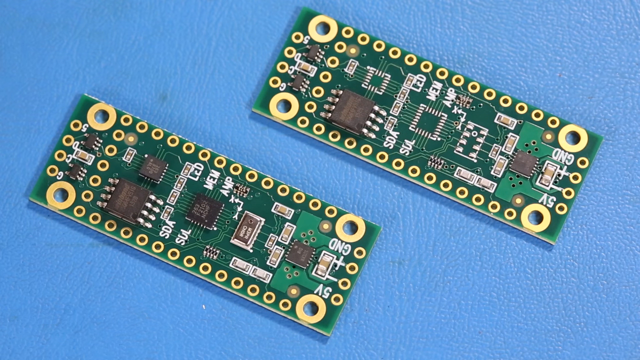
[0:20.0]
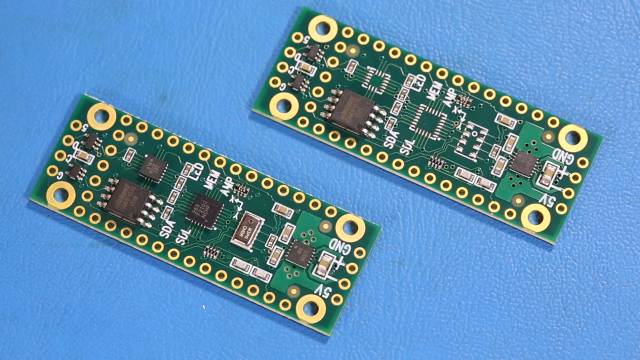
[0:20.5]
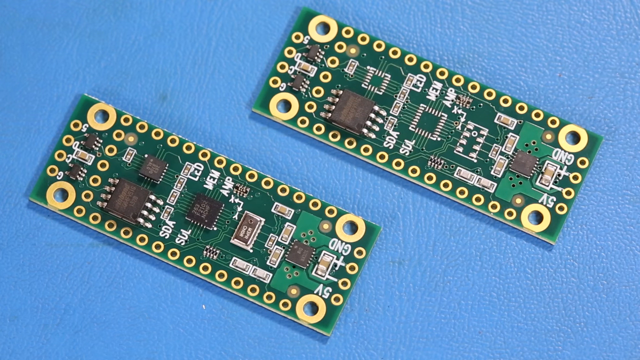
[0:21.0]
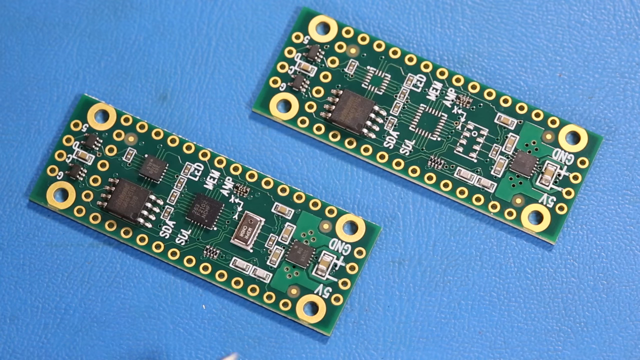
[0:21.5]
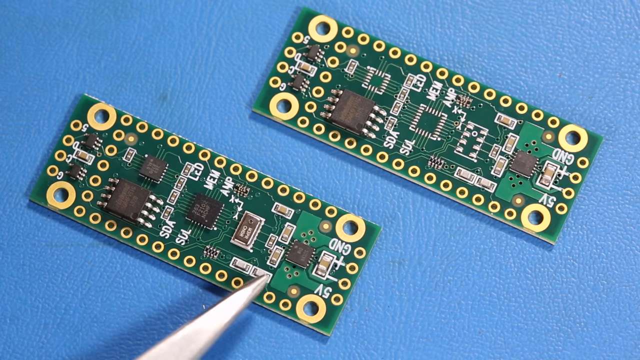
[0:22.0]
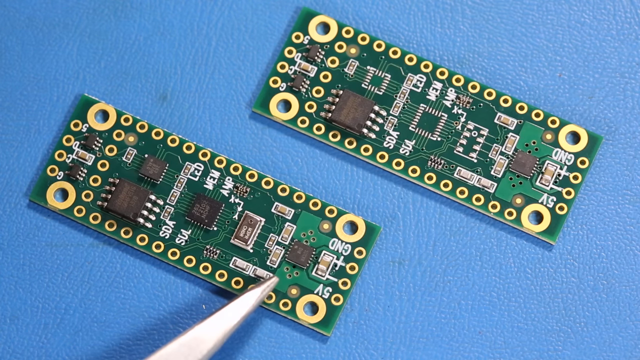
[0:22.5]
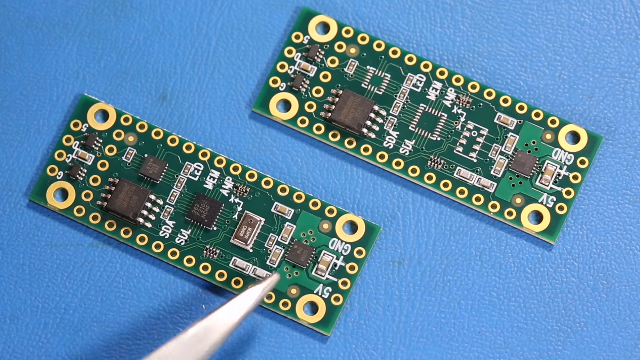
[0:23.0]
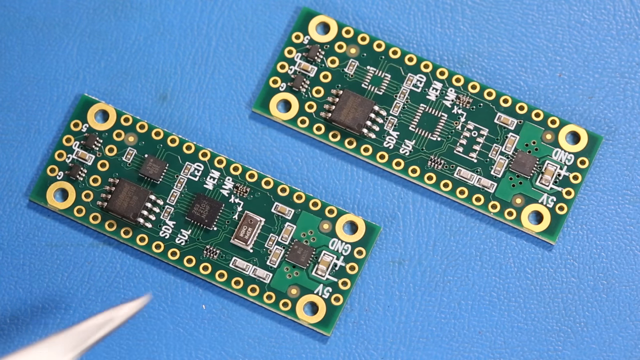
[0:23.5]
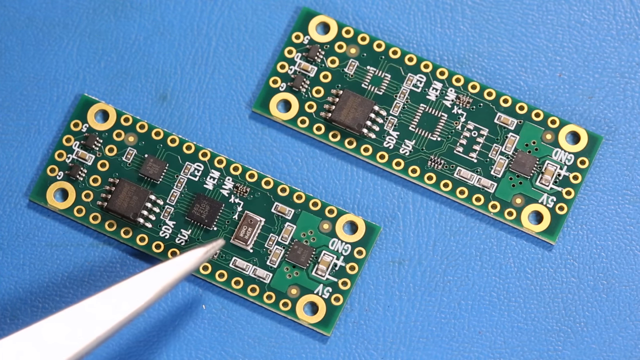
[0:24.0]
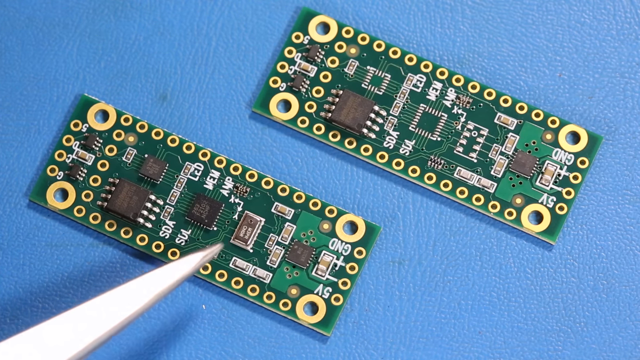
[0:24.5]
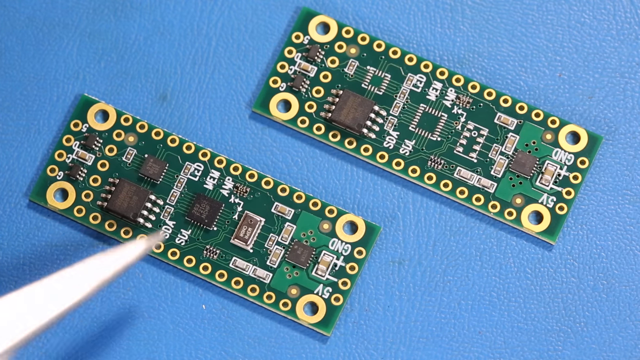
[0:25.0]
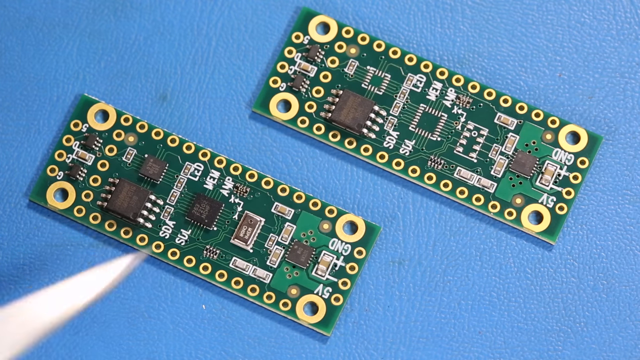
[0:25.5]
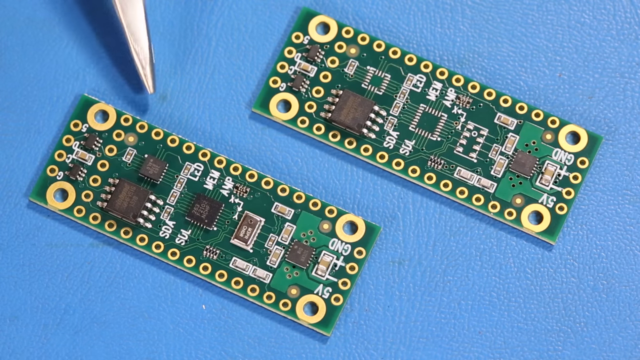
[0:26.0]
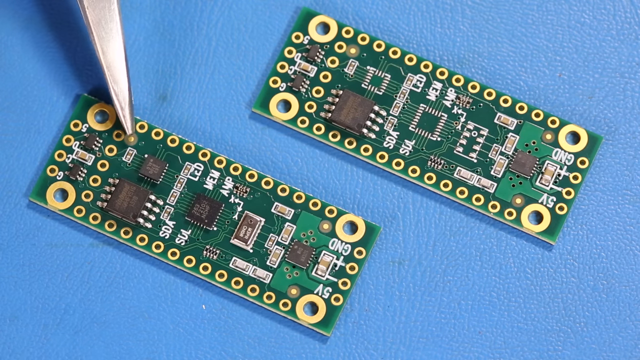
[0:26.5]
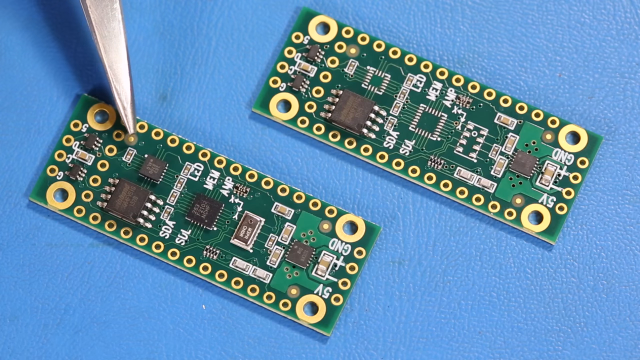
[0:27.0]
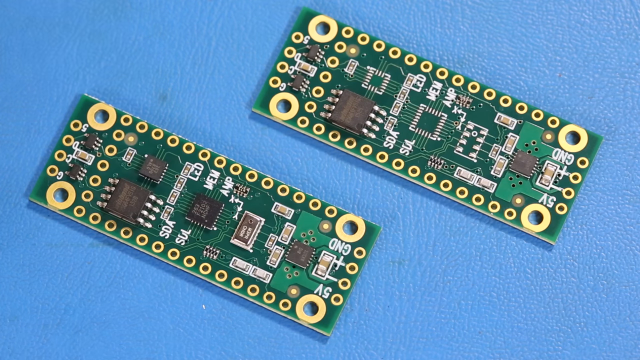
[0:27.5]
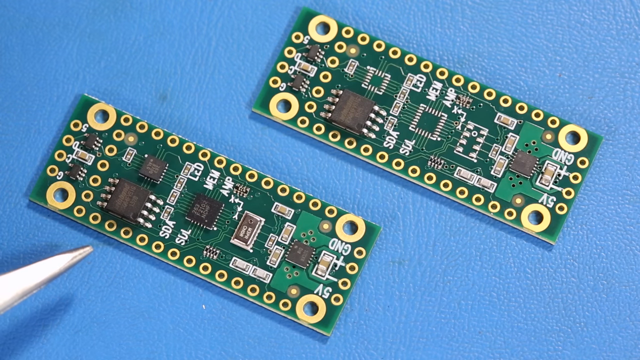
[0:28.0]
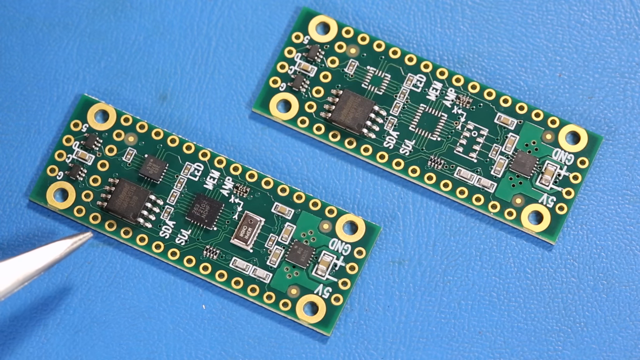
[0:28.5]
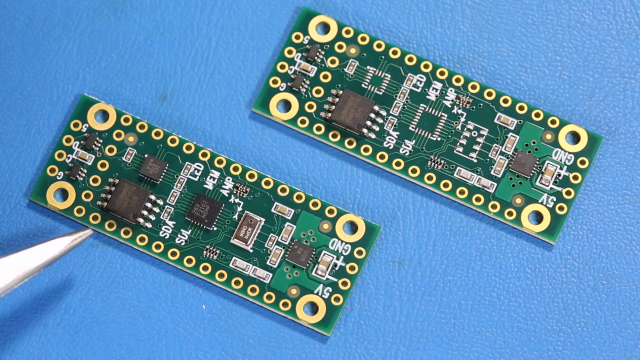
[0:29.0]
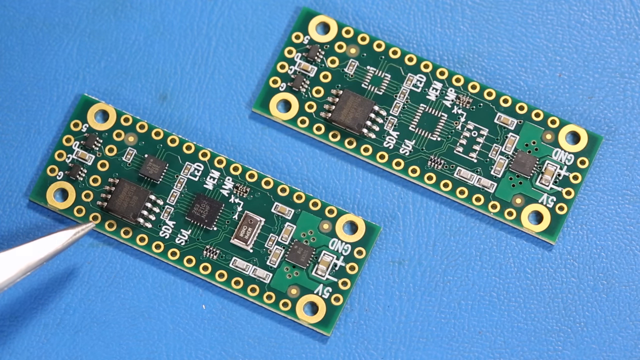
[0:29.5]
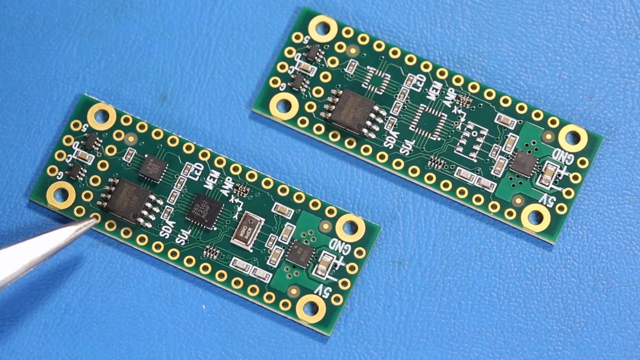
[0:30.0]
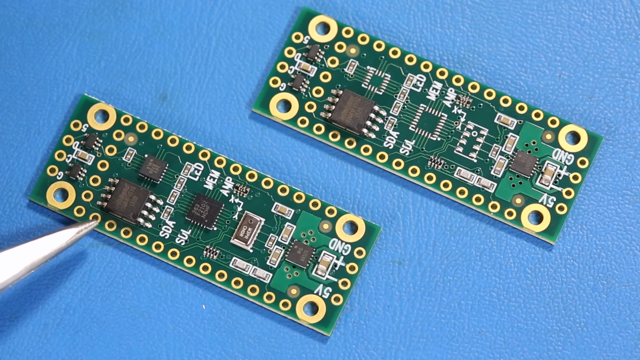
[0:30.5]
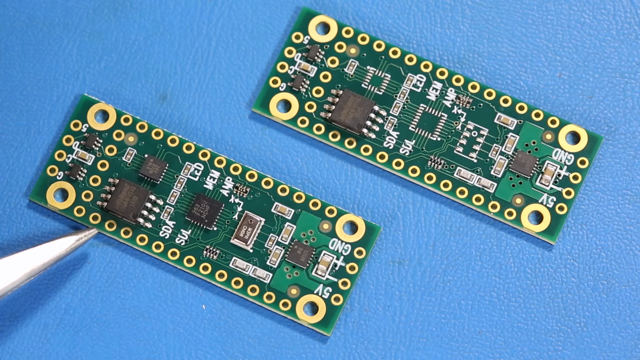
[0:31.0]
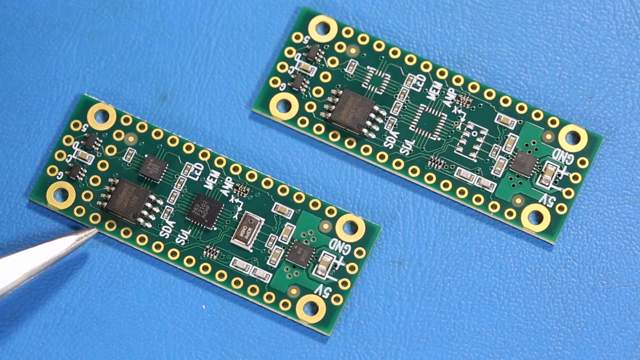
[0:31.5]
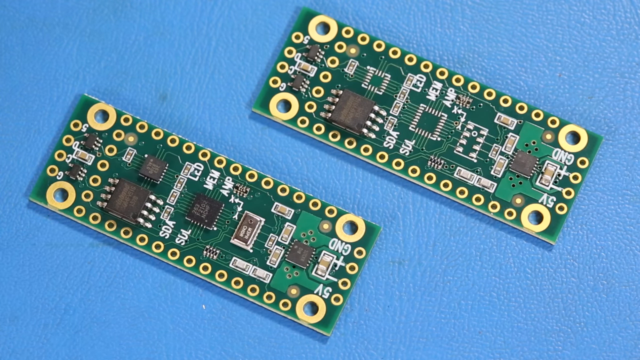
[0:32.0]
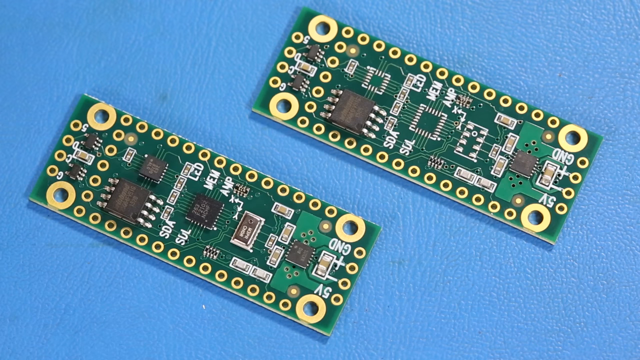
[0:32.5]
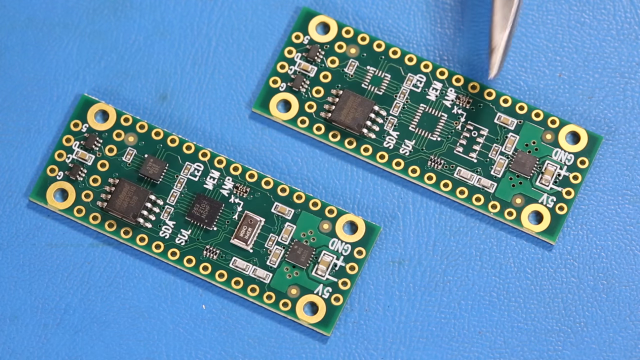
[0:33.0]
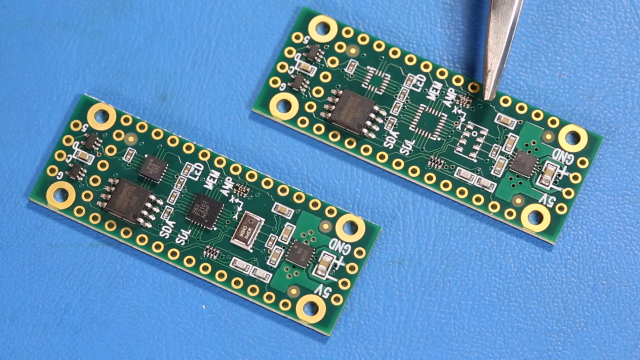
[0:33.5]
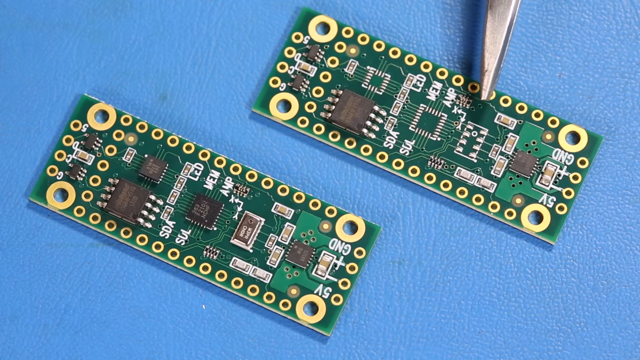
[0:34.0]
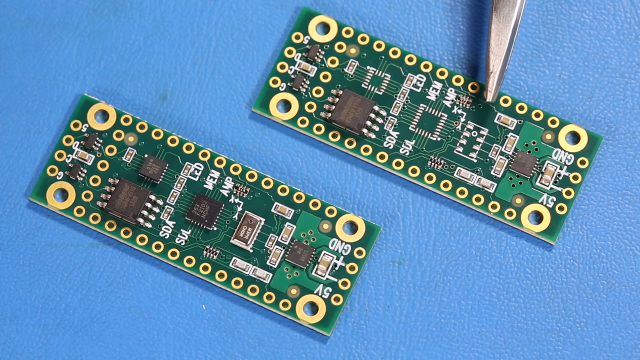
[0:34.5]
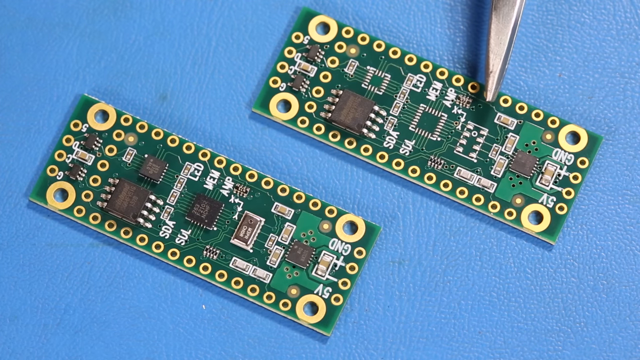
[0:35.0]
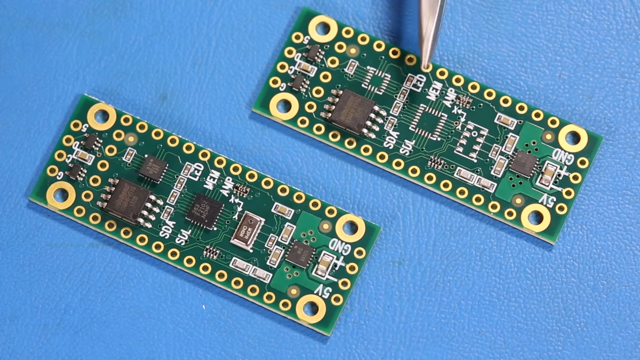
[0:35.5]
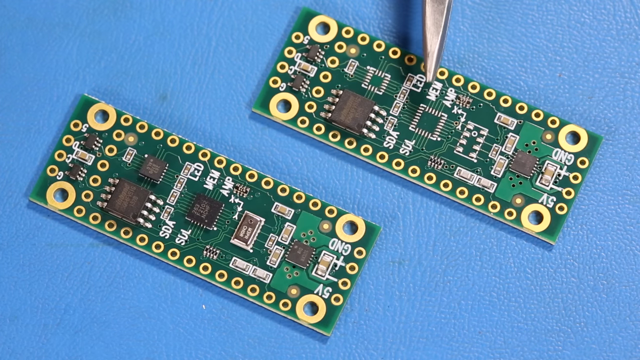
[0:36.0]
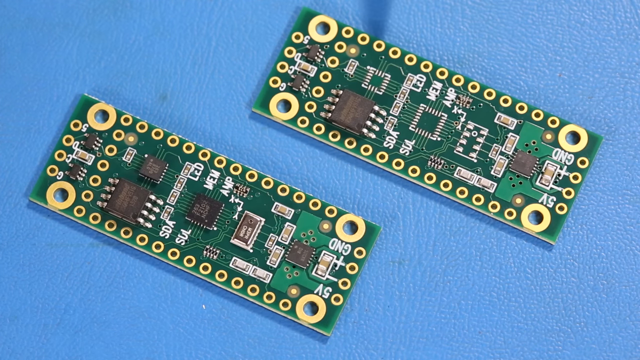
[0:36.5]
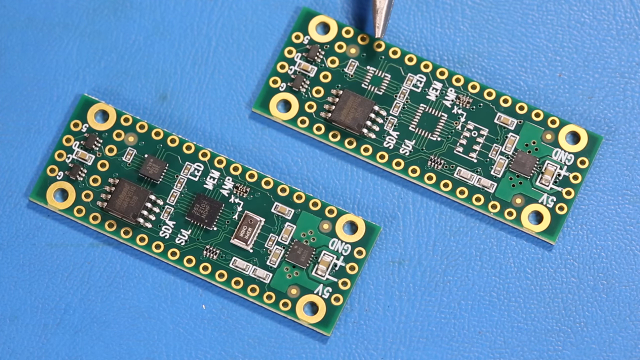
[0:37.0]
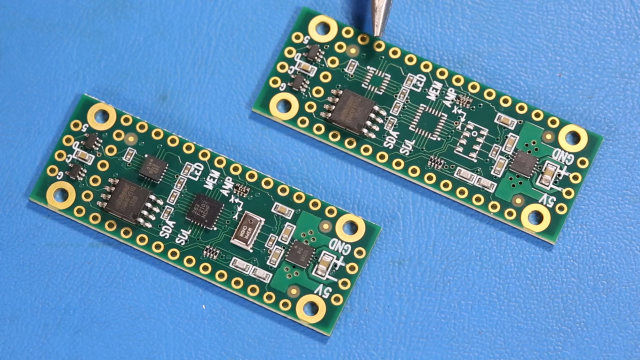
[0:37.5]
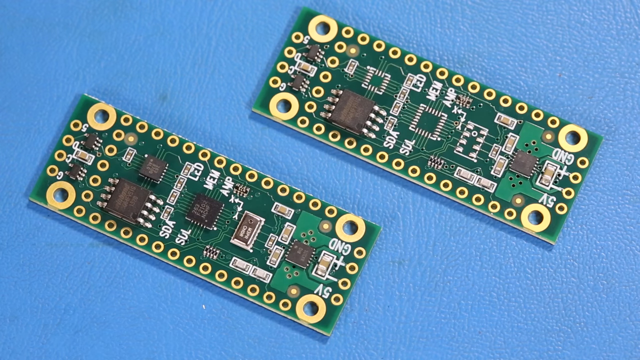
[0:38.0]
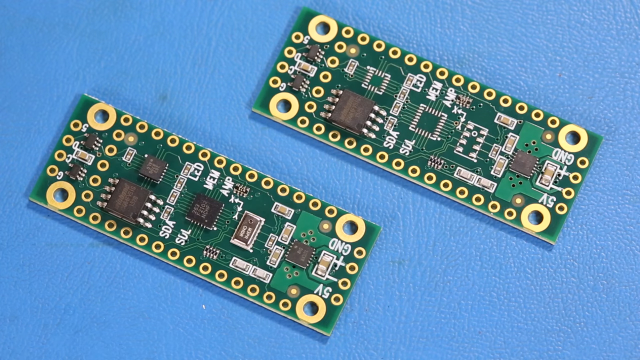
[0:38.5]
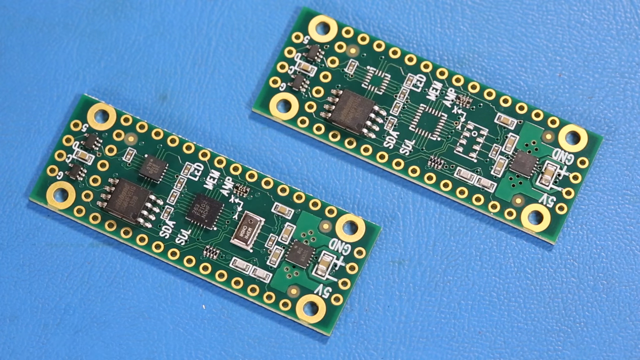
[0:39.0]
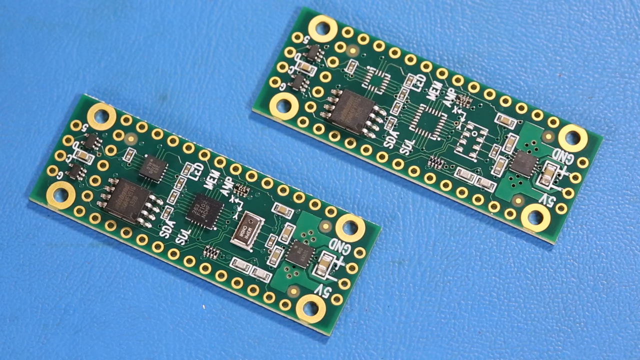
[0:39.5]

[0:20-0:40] A close-up shows two green circuit boards with many silver- and gold-toned components and little black microchips. The camera remains static while a long, silver-looking tool points at different sections of the boards, coming in from different angles: first from the bottom middle, then the bottom left, the top left, the bottom left, the top right and finally the top middle. The circuit boards are laid flat and diagonally on a blue table with a textured background, their green color standing out against the blue. Though small, the boards are very complex, with many circuits and writing on them.